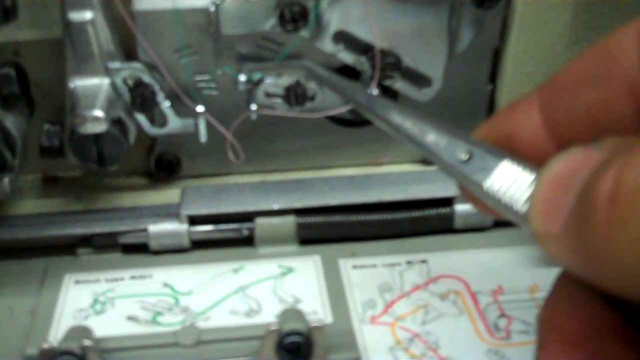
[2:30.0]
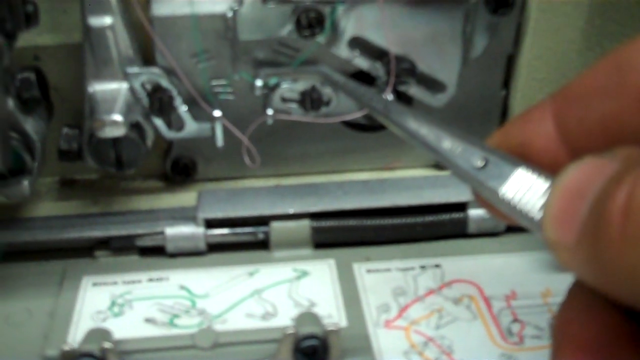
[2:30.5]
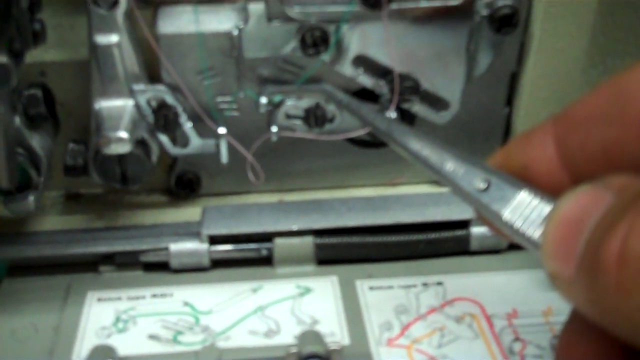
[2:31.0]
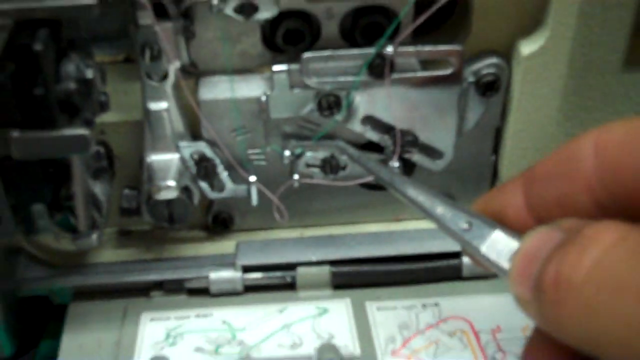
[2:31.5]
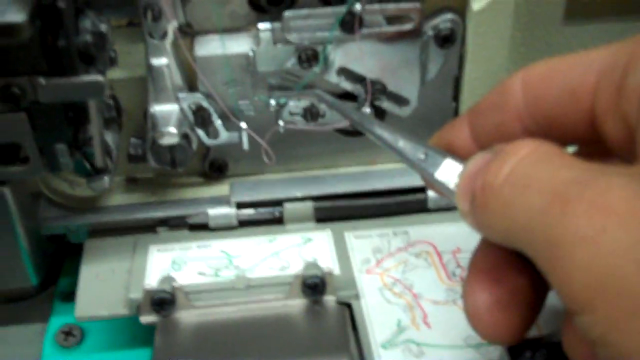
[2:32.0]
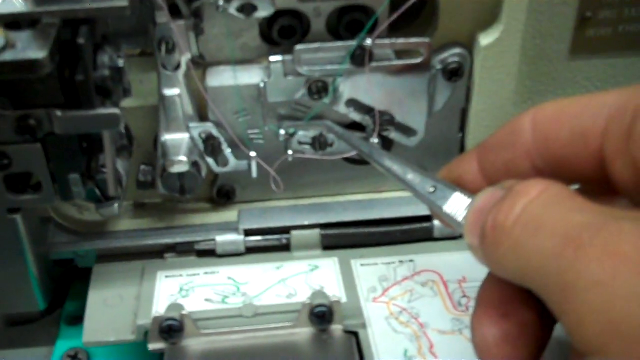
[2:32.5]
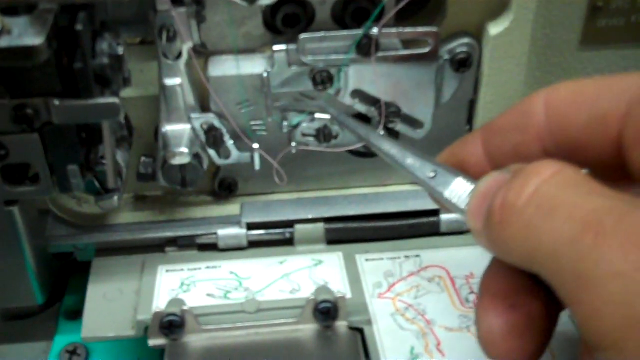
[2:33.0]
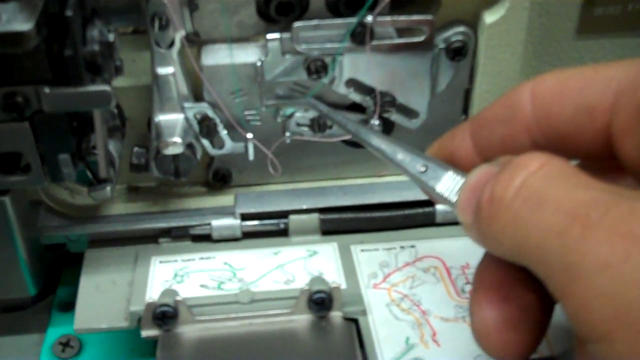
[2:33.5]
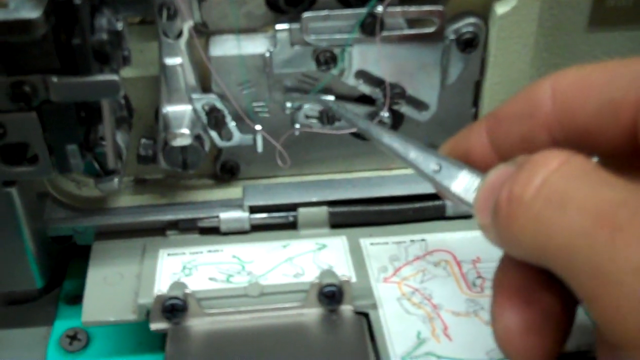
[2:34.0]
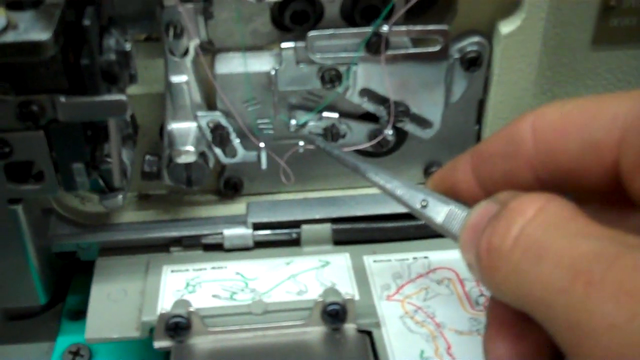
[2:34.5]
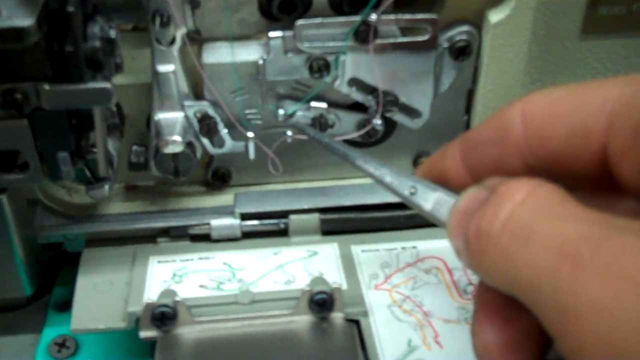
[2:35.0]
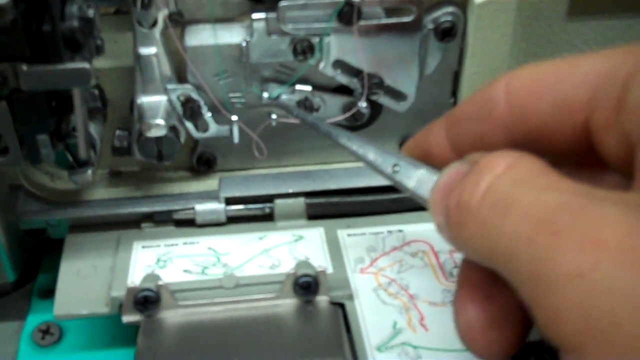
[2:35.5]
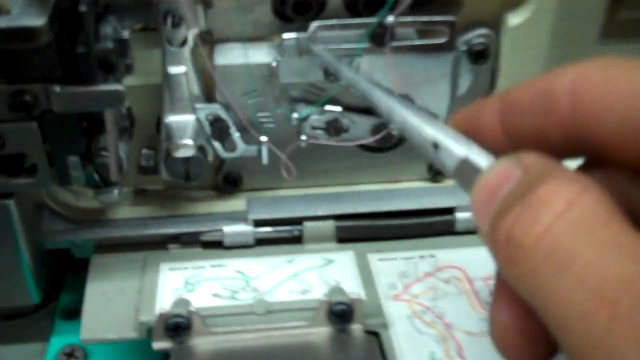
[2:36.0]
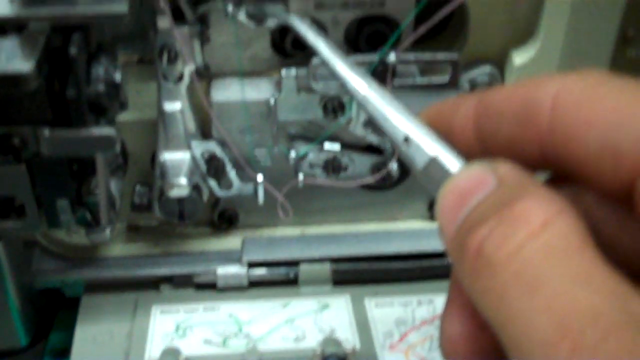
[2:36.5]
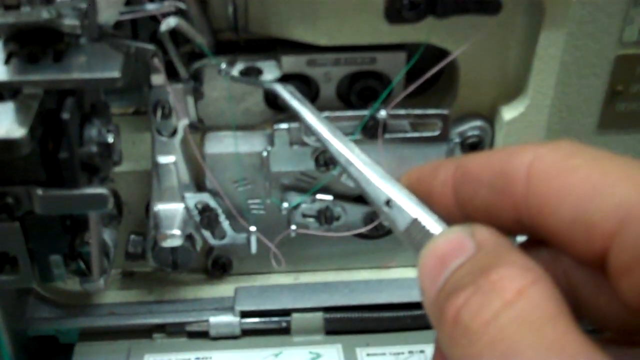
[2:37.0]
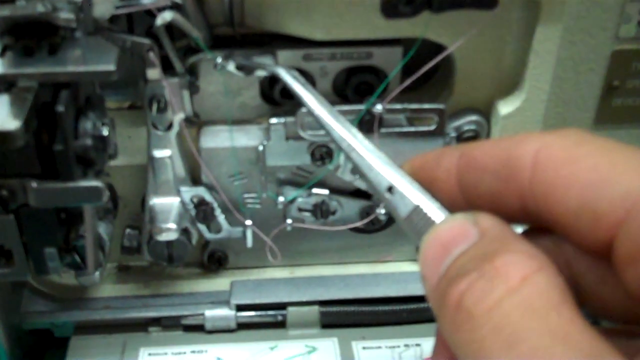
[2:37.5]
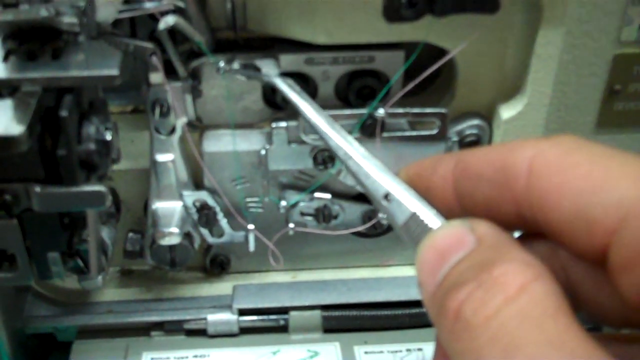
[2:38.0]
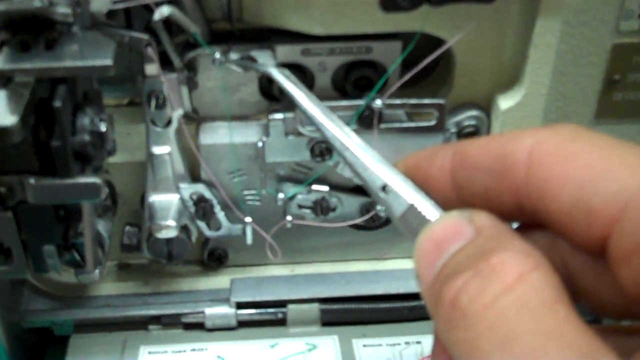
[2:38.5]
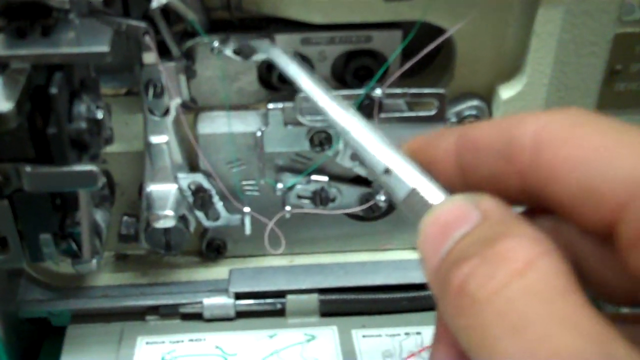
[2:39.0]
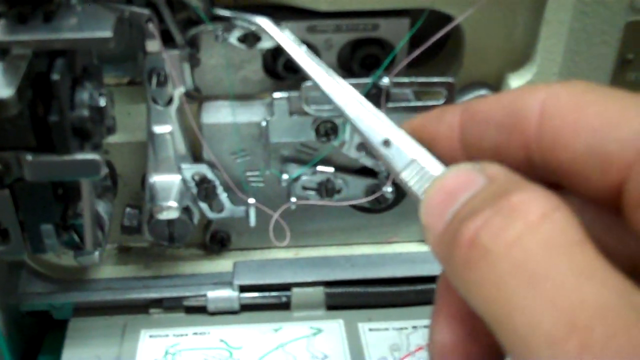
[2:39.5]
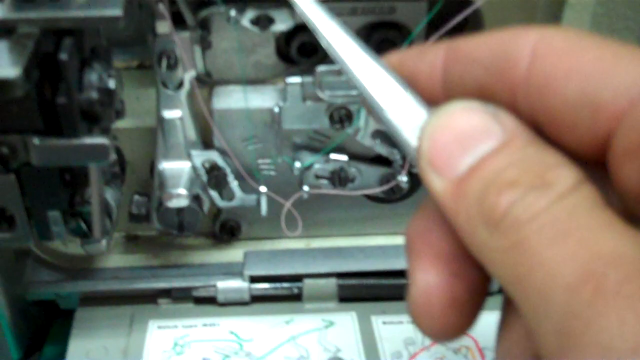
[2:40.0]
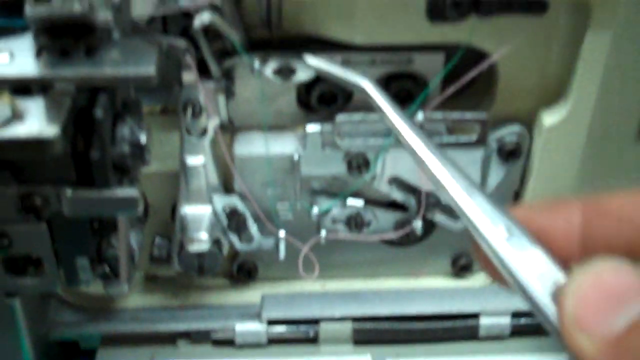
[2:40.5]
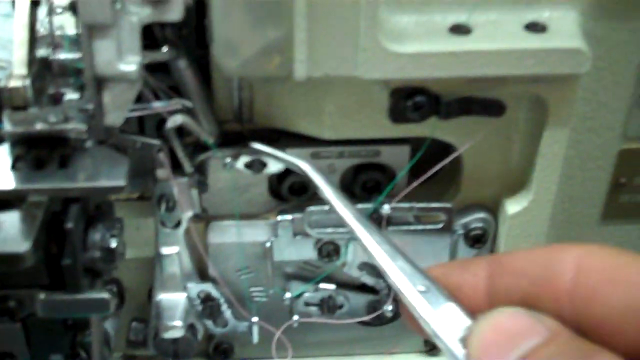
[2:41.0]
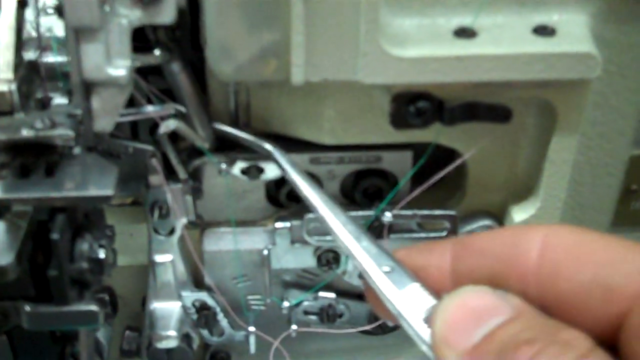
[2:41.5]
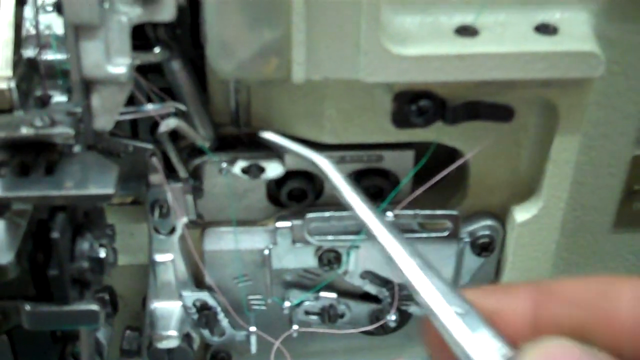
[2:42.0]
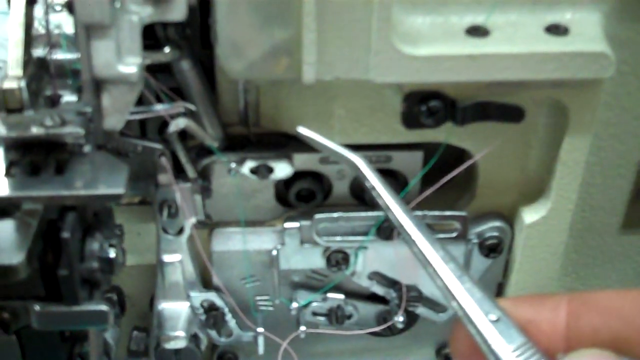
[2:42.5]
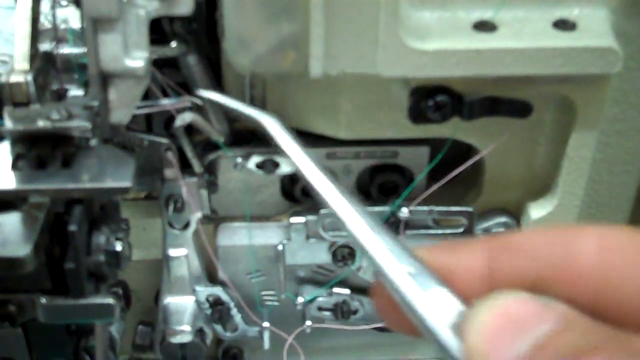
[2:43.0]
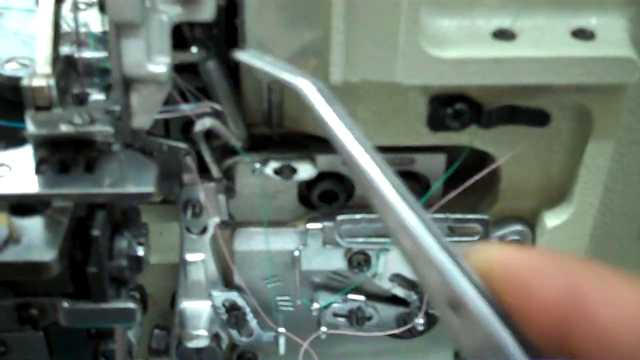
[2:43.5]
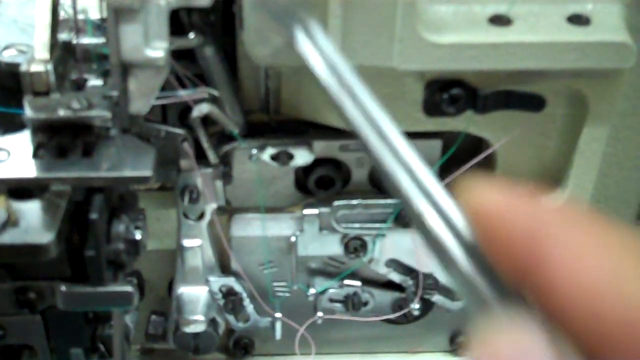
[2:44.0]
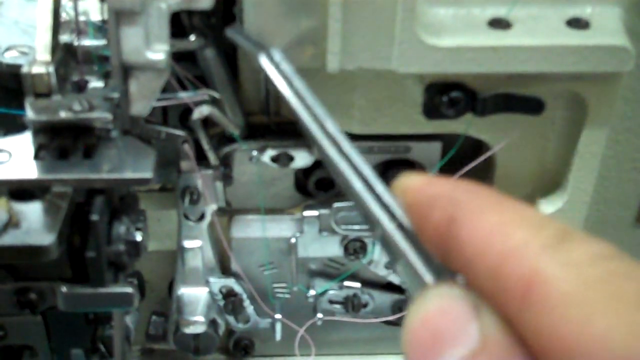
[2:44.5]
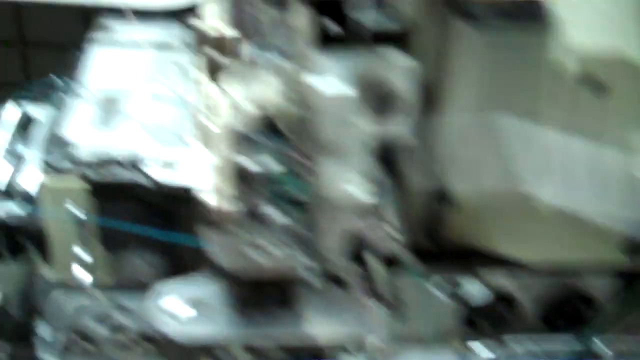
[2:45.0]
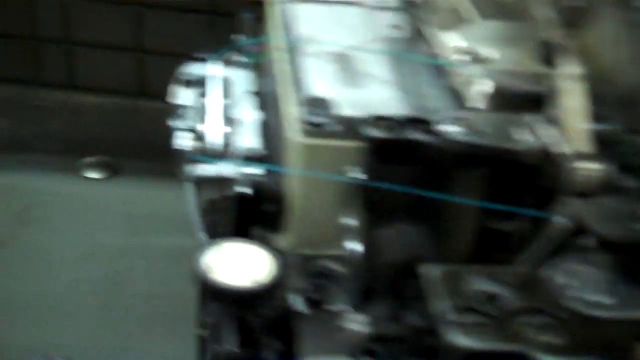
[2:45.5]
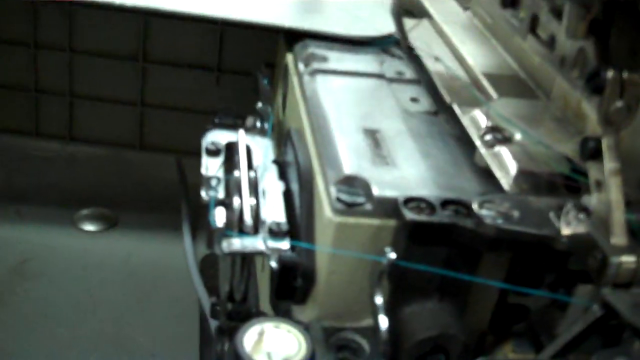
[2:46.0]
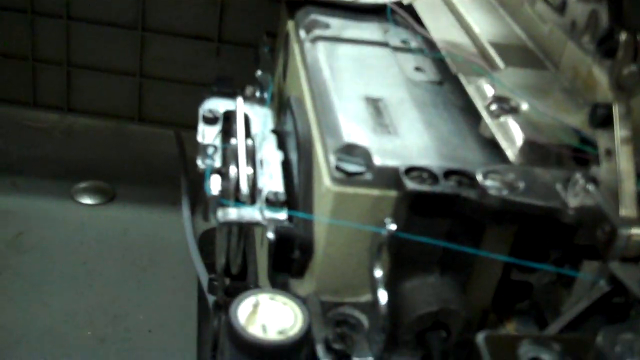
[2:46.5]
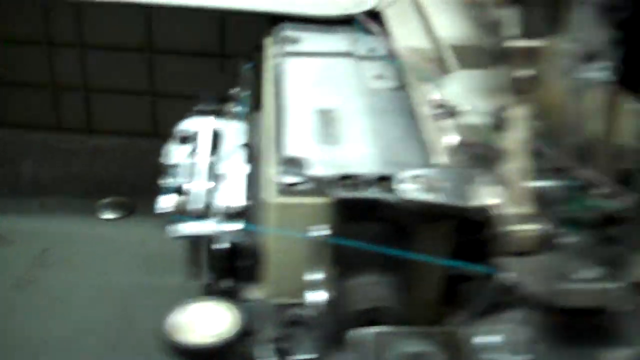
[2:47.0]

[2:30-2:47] A close-up shot of the back of the machine shows how the green thread is intertwined, with the different metal pieces and screws holding the thread in different places. The shot zooms out to show more of the metal workings, and below are two labels with multiple lines of colors. The pink thread is also intertwined in the metal pieces and screws, with a small loop located between metal arms; the left metal arm holding the pink thread is larger than the right one. A hand with tweezers points to different spots on the green thread and moves upward to show how it connects to a smaller metal piece, which leads to a larger metal piece and more workings of the machine.